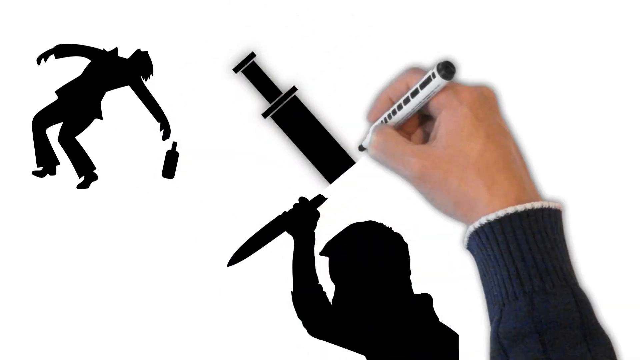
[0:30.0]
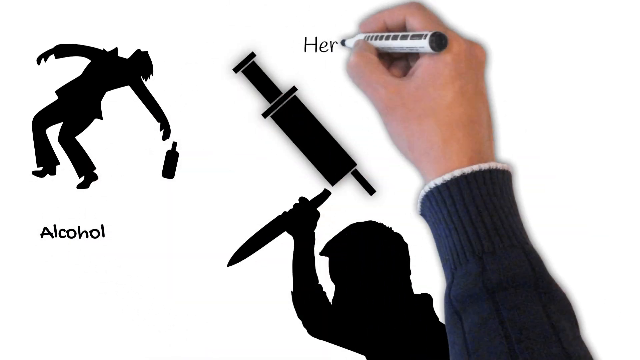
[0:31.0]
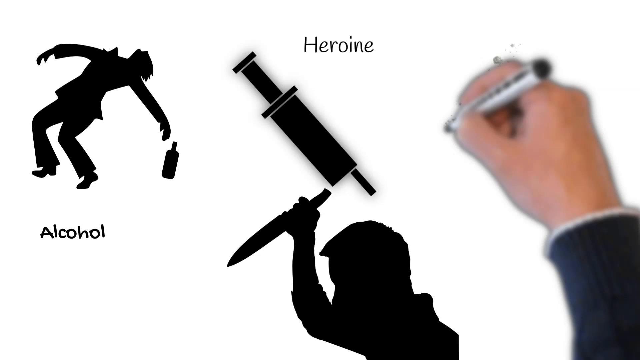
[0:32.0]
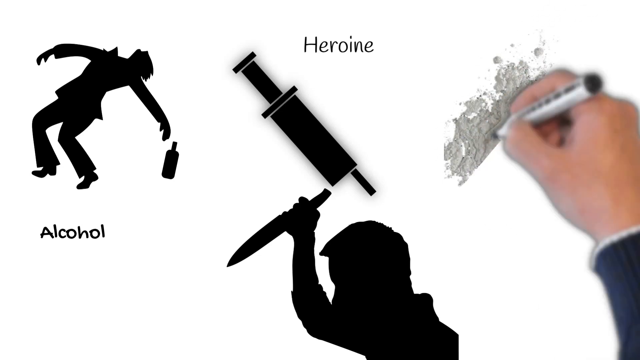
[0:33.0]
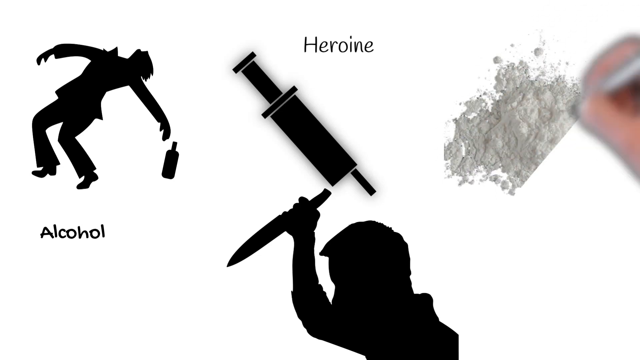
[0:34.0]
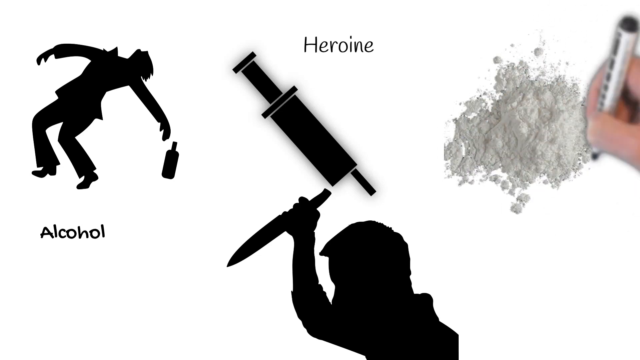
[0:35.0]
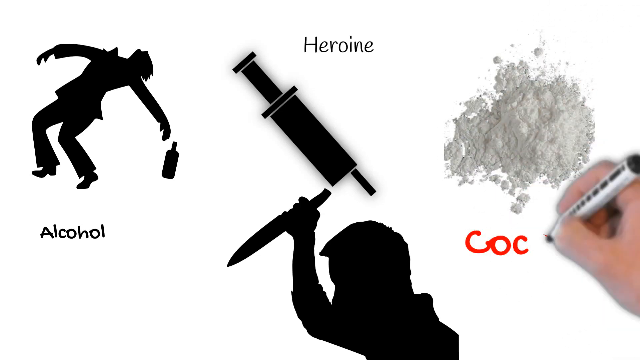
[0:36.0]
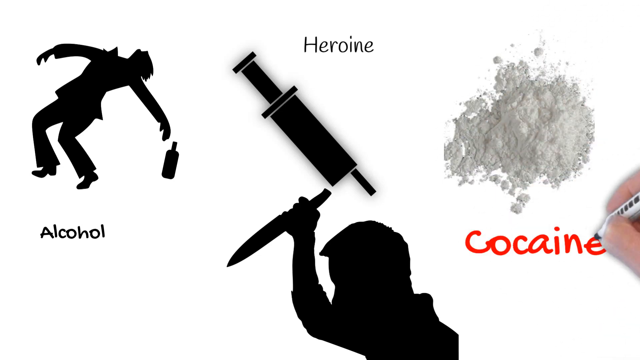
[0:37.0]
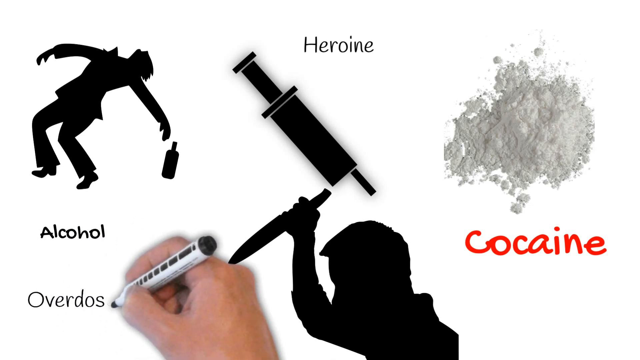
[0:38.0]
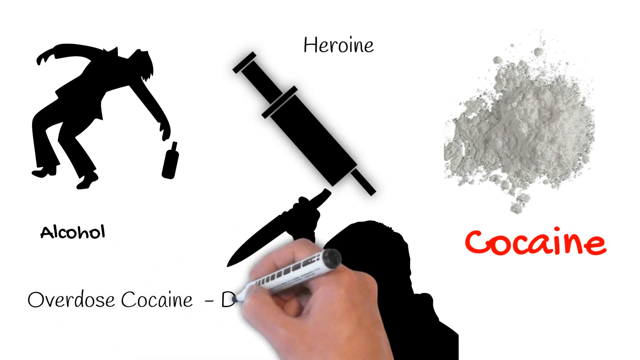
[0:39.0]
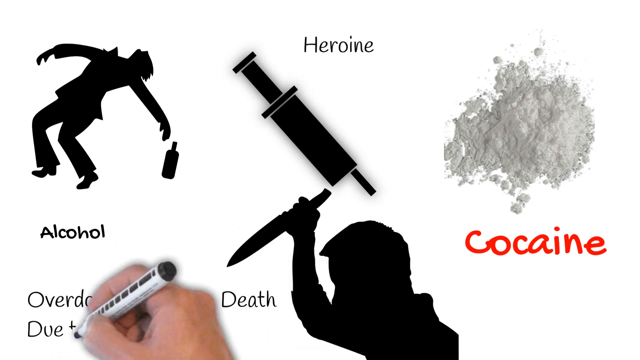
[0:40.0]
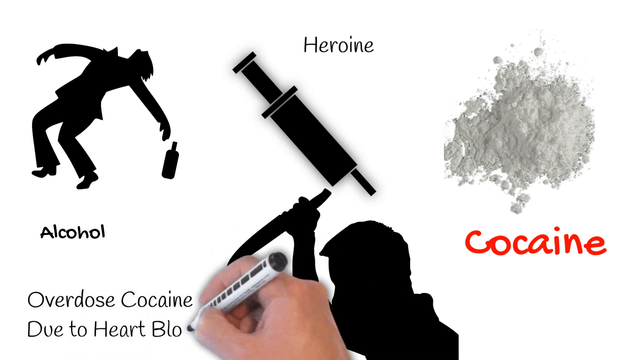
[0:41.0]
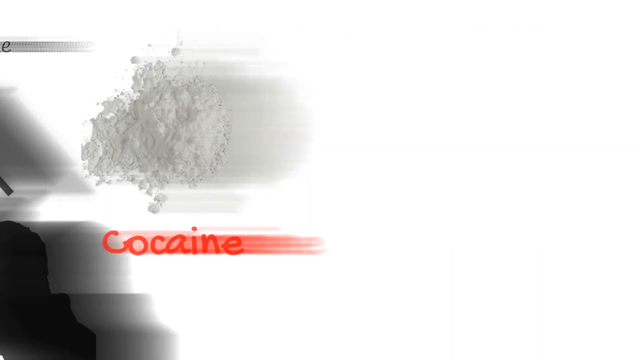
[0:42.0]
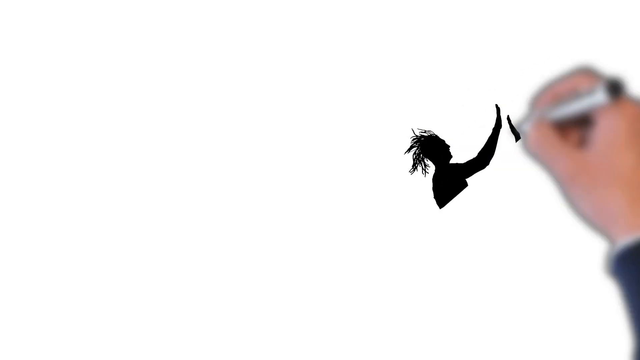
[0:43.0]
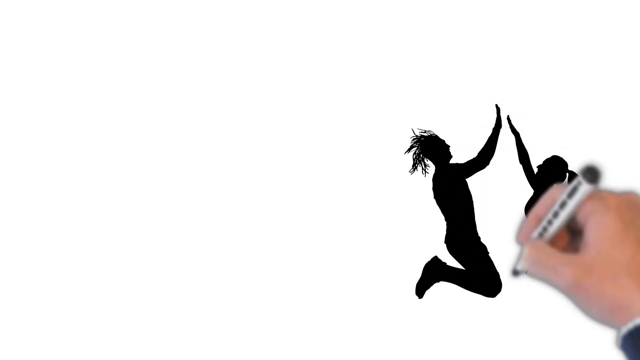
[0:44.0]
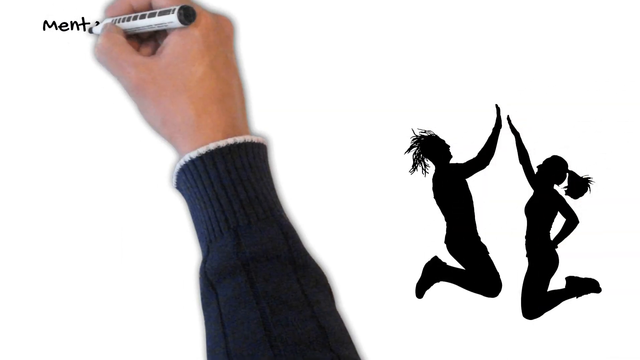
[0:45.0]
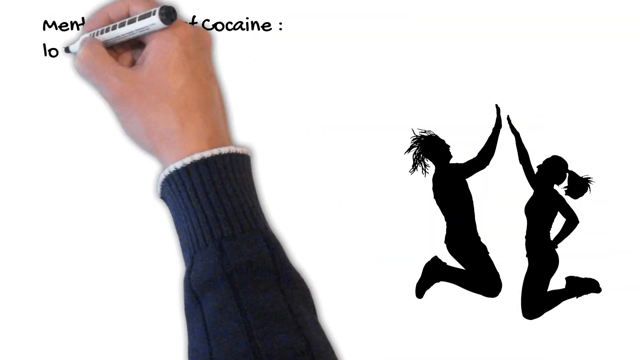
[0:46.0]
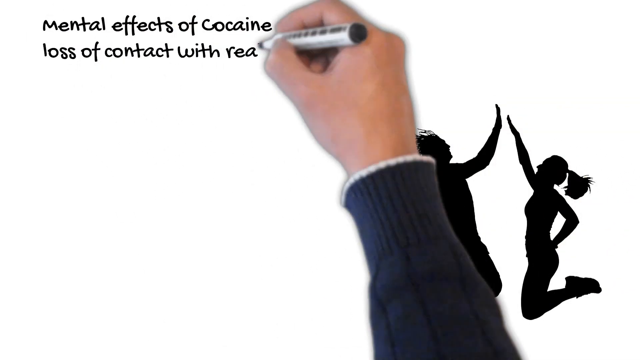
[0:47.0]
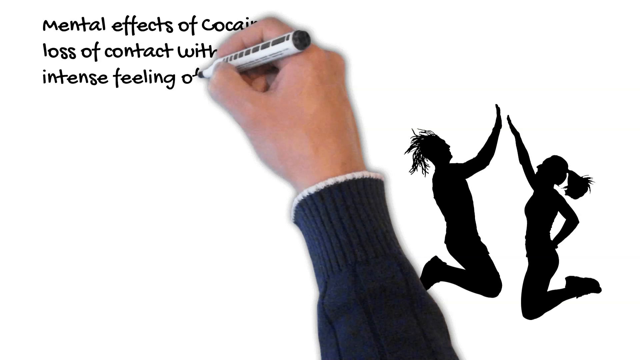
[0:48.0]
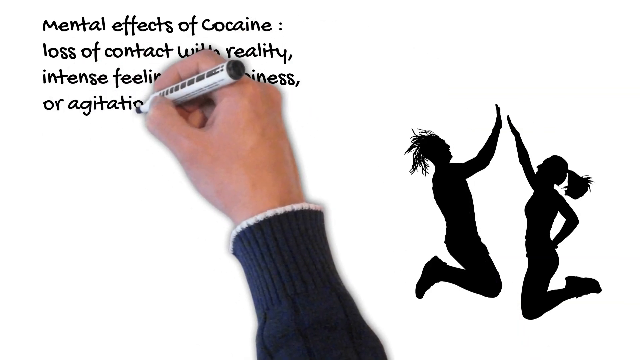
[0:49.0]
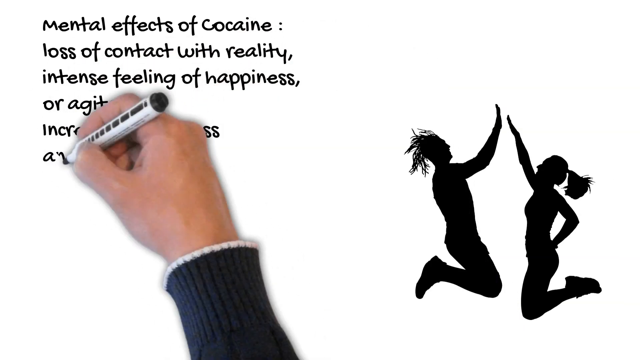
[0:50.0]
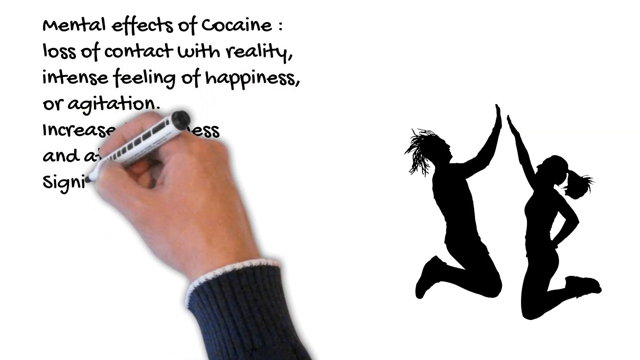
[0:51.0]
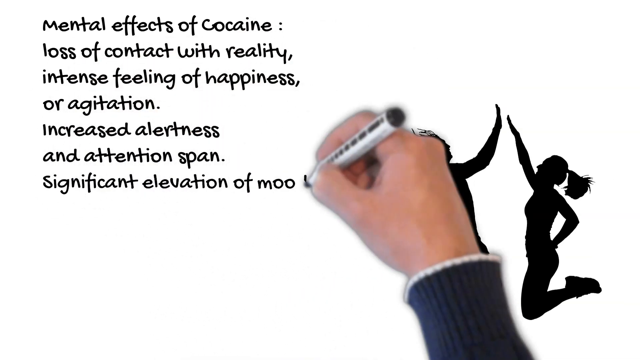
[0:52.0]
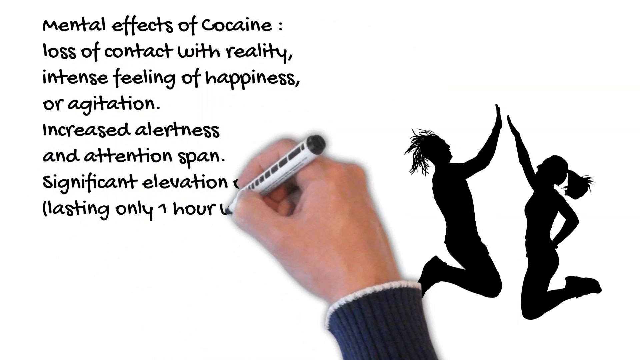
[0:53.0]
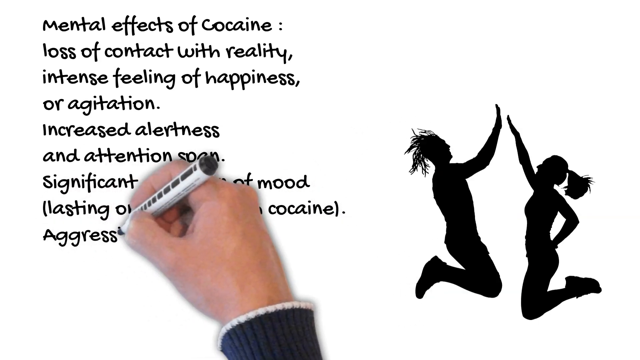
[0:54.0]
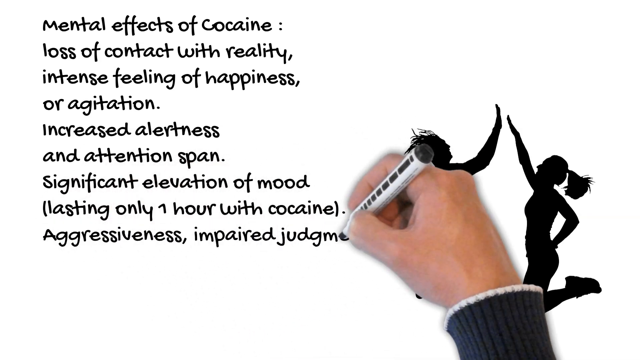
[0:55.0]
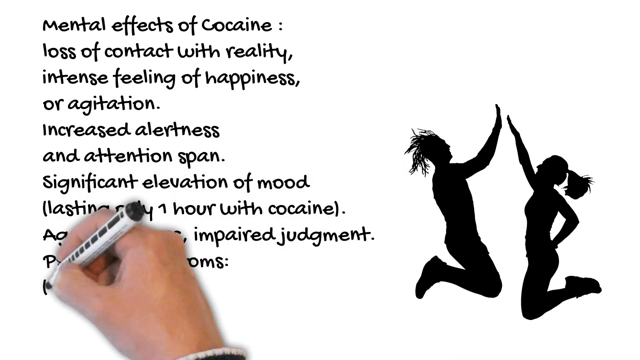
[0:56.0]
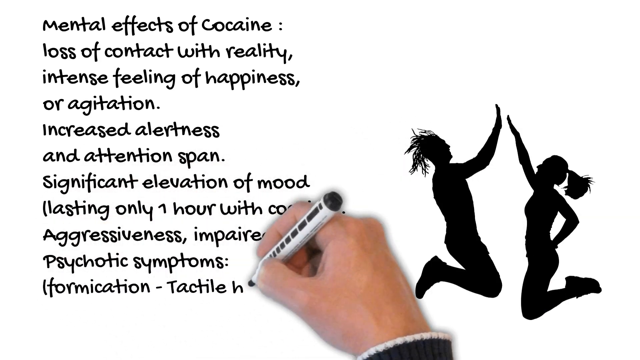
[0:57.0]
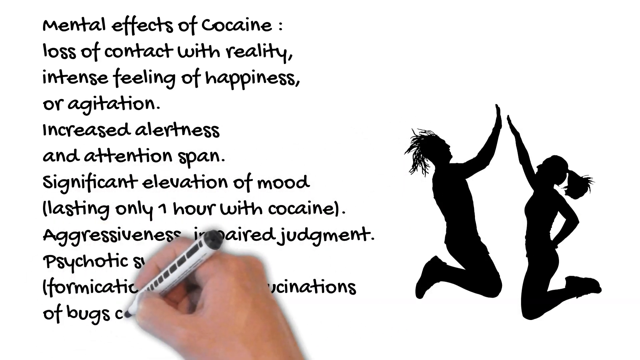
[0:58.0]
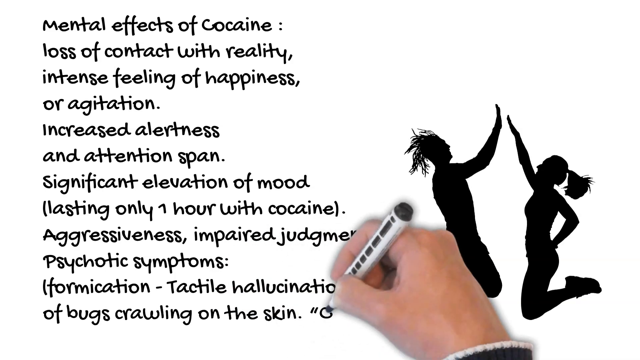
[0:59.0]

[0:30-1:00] An animated hand draws items on a whiteboard. The hand has light skin, a Caucasian hand, with a black sweater with white trim around the end, and it holds a white pen with black ink and black text all over it. Already drawn are the word "alcohol" on the left with a silhouette of a drunkard falling over backwards and dropping a bottle from the left hand, the word "heroin" in the middle with what looks like a needle, and at the bottom a man looking down and holding a knife above his head with his right arm in a threatening manner. On the right side, the marker draws a pile of cocaine powder on a flat surface, and the word "cocaine" is written in red. In the lower left is the word "overdose" with text reading "death due to heart attack heart block." The scene then swishes over to the left, and the hand draws two silhouetted people on the right, a female and a male, who look like they are jumping in the air trying to give each other a high five, the female on the right using her right hand. In the upper left-hand corner it says "the mental effects of cocaine =" followed by a list: "loss of contact with reality," "intense feelings of happiness or agitation," "increased alertness and attention span," "significant elevation of mood lasting only one hour with cocaine," "aggressiveness," "impaired judgment," "psychotic symptoms," "formication," and "tactile hallucinations of bugs crawling on the skin, cocaine bugs."